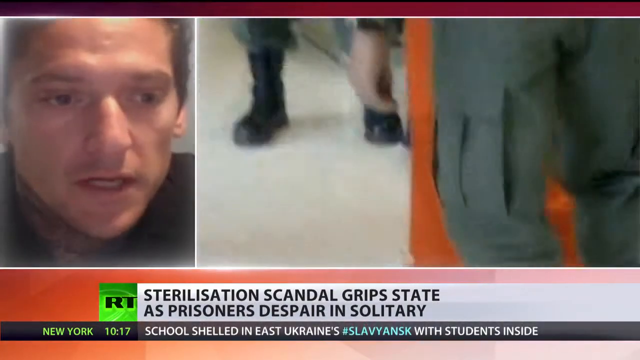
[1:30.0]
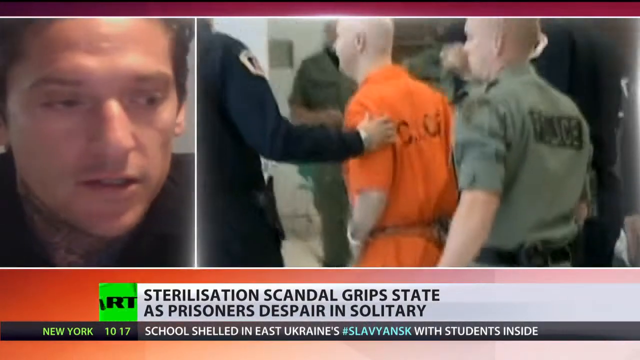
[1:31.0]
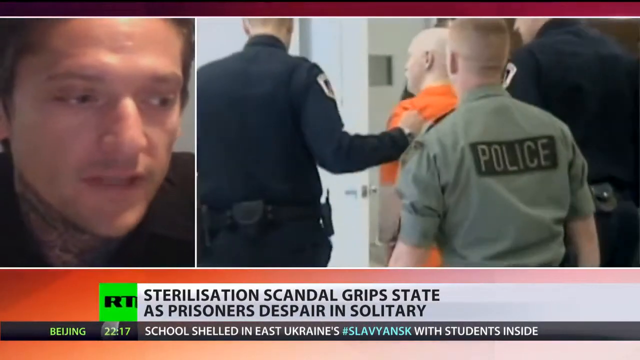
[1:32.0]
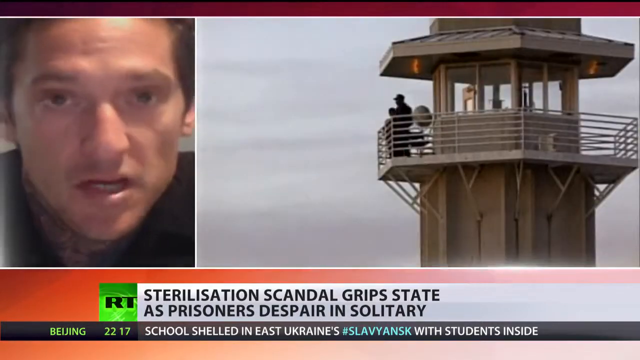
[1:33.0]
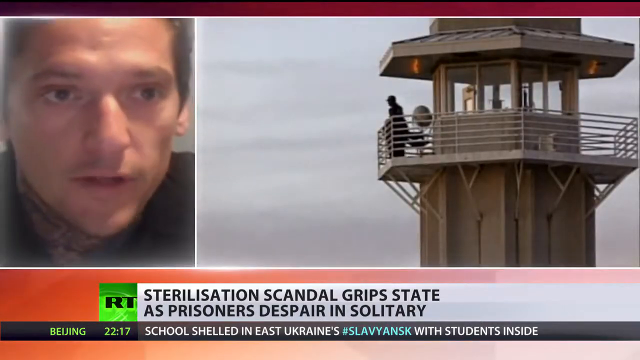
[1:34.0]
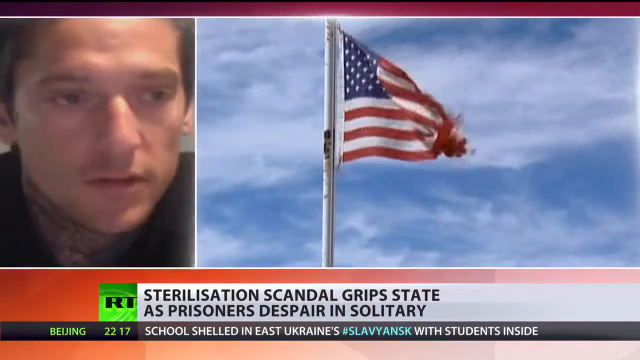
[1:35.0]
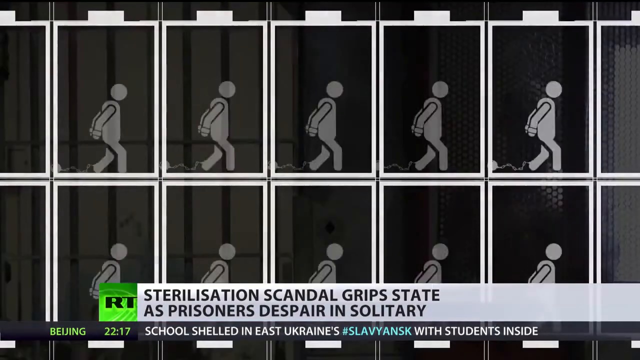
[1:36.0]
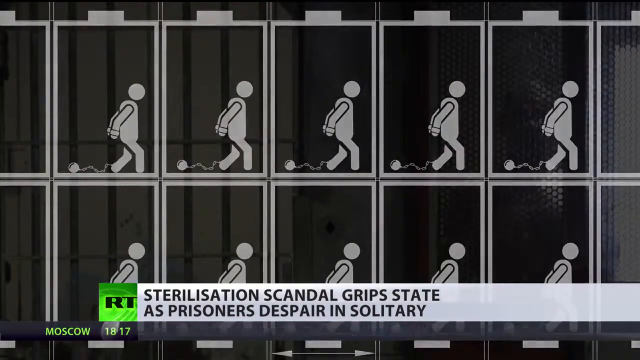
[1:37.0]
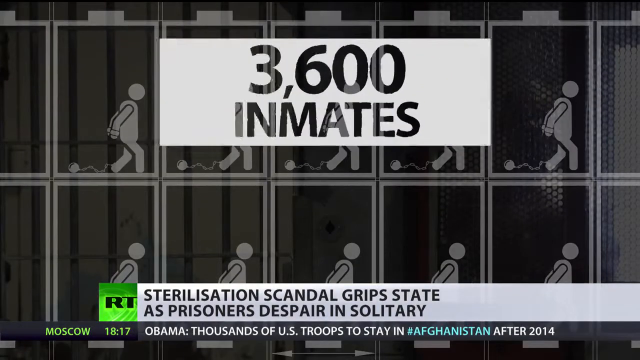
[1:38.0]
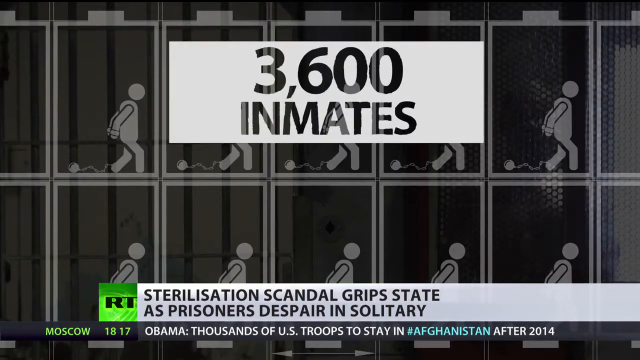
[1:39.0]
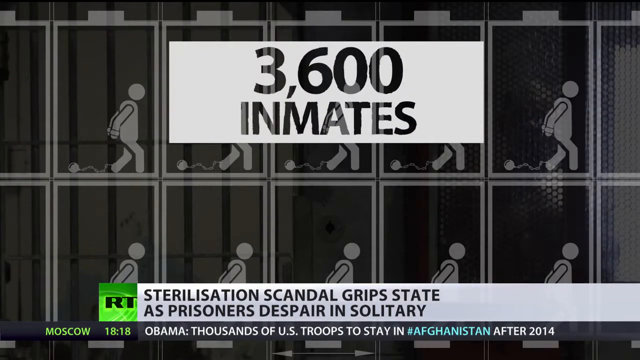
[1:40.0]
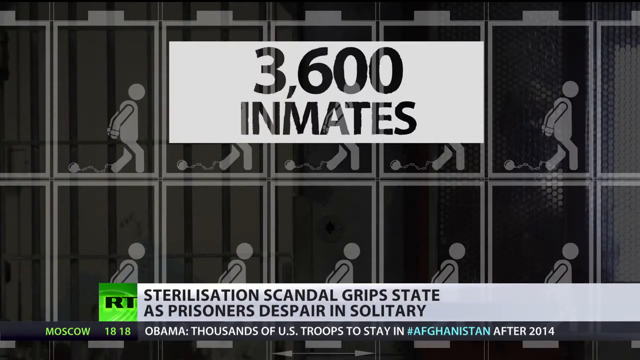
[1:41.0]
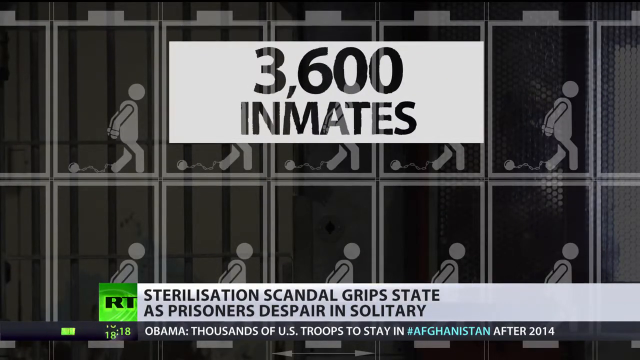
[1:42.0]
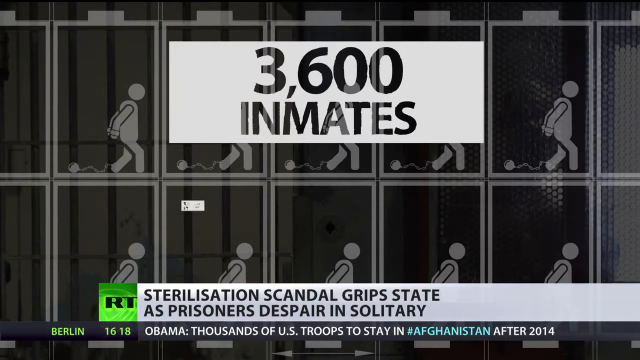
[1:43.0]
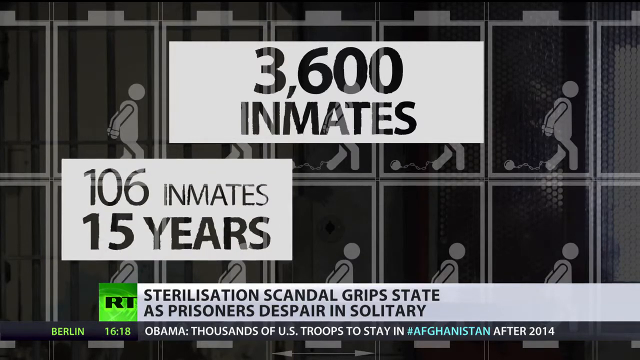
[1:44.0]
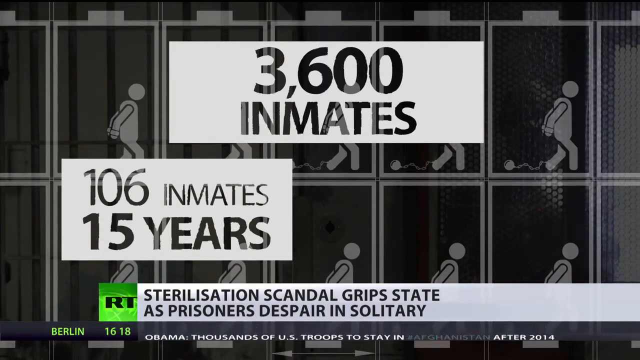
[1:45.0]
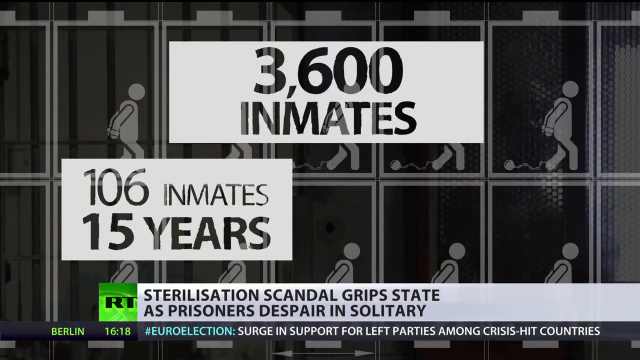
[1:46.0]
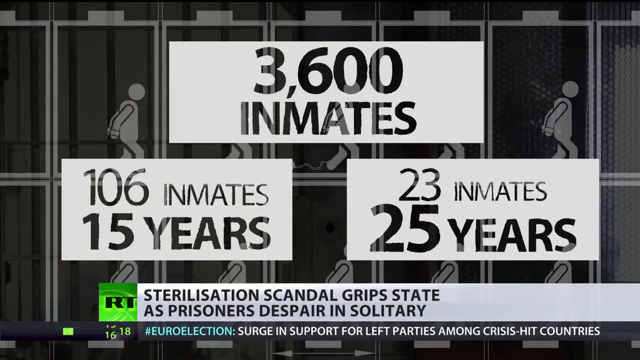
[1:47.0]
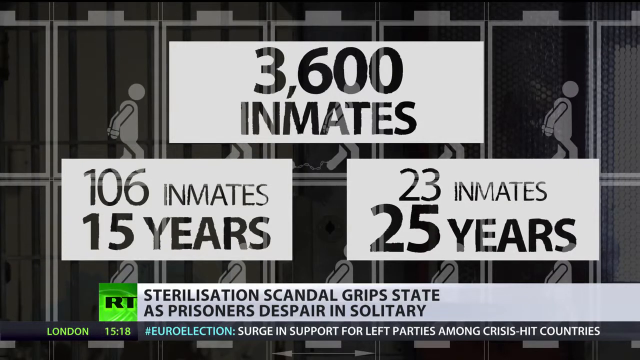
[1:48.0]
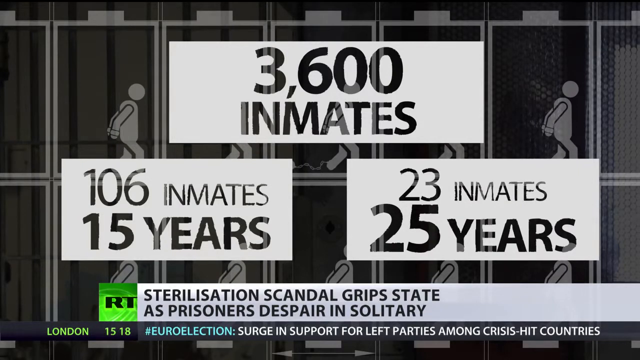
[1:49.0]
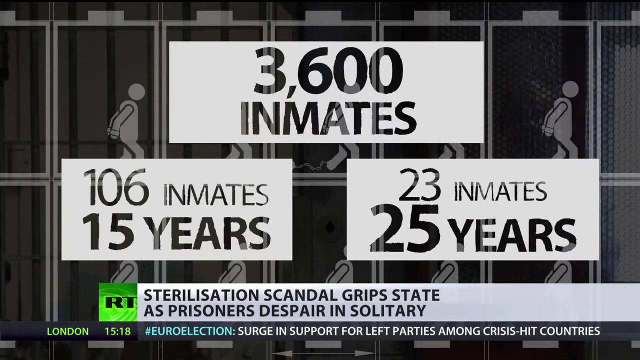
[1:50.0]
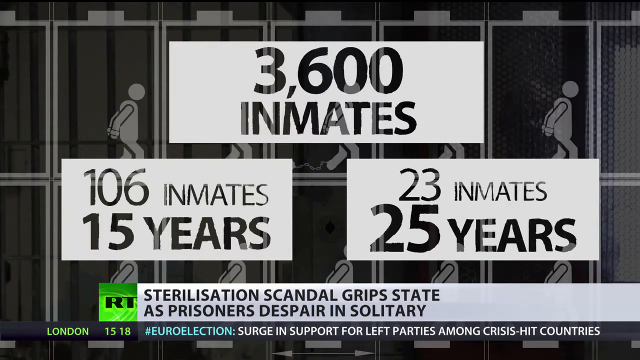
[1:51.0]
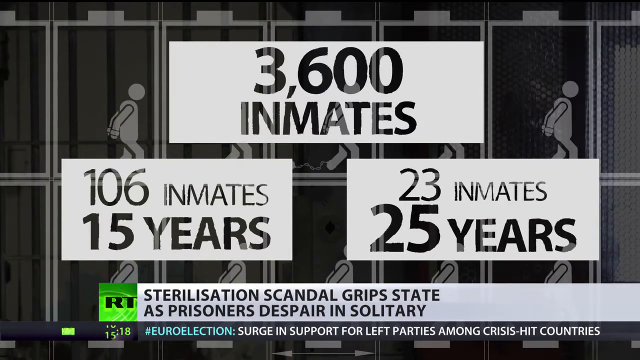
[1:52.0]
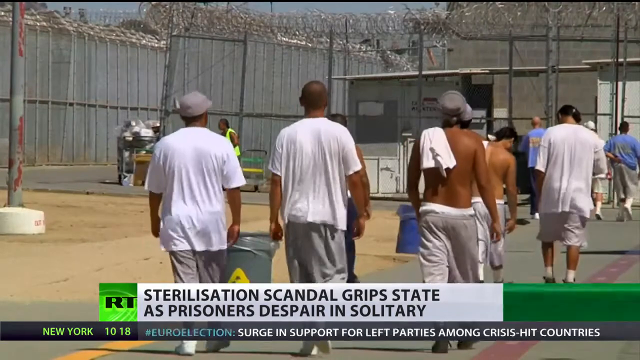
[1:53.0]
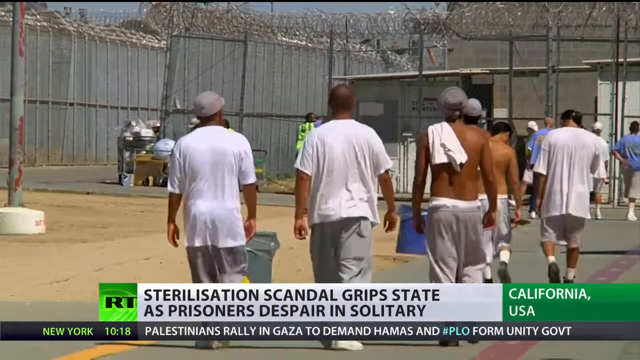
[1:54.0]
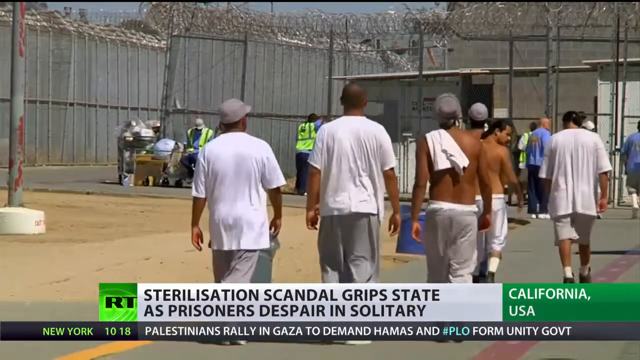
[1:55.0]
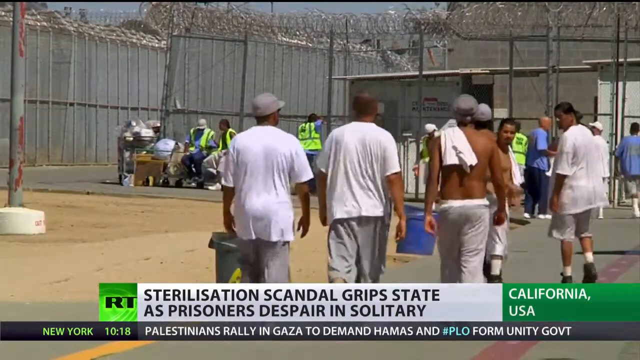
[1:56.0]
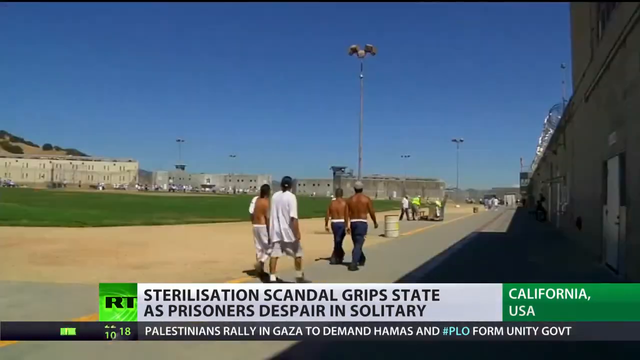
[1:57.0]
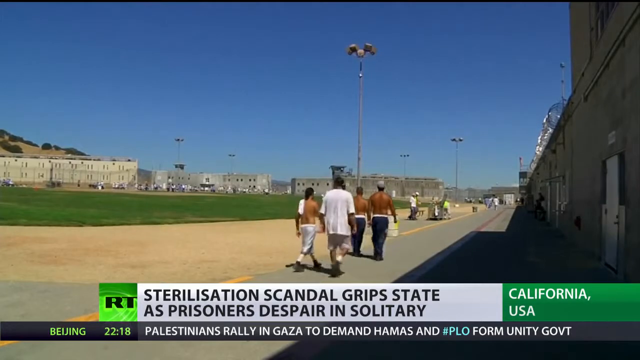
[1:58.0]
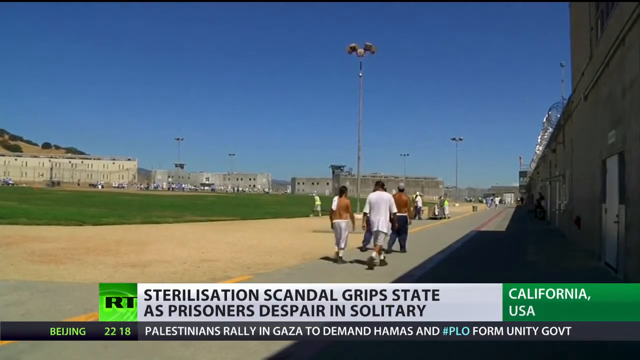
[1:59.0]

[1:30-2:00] A man on the left, white and apparently in his late 40s, gives some kind of testimony. On the right is another guard tower, whitish, with a balcony going around the entire tower and some windows. The title "sterilization scandal grips state as prisoners despair in solitary" is at the bottom. Another scene follows: a moving cartoon of prisoners in individual square cells, drawn as basic plain white cartoon figures, handcuffed with balls and chains behind them, about ten of them. Statistics come up: "3,600 inmates", "106 inmates over 15 years" and "23 inmates 25 years". The shot then shows inmates in the yard: some have no shirt on while others wear white shirts, and all wear gray pants or gray shorts with black shoes.